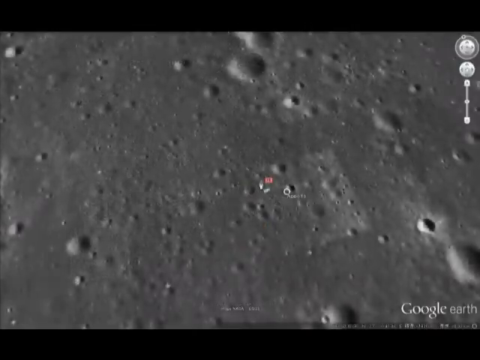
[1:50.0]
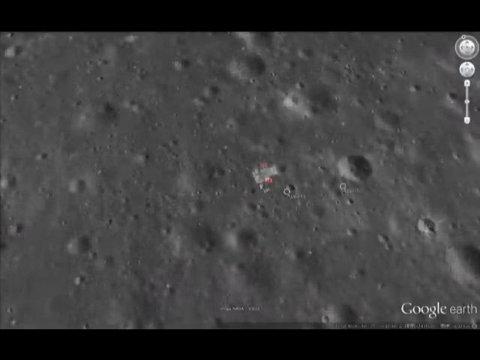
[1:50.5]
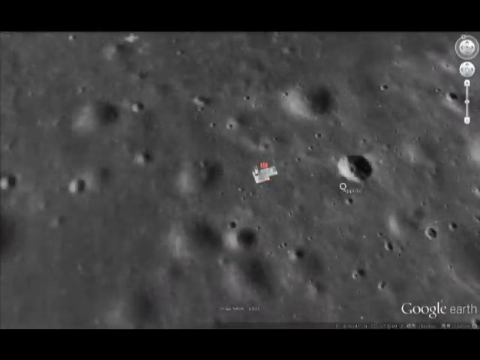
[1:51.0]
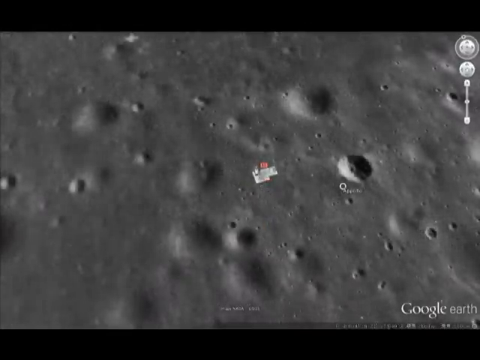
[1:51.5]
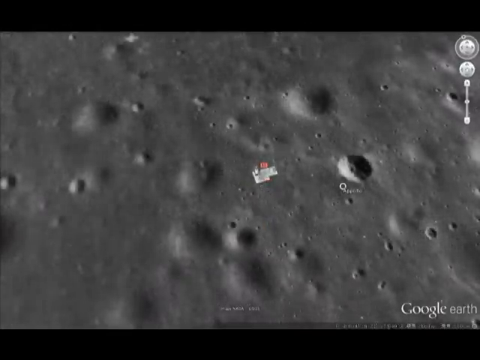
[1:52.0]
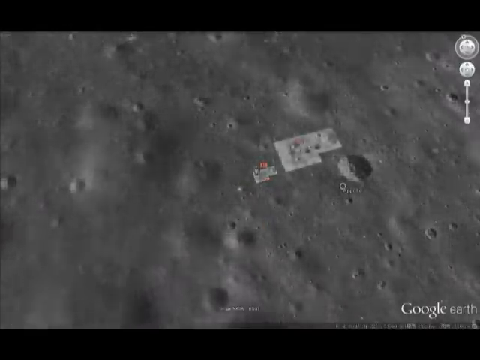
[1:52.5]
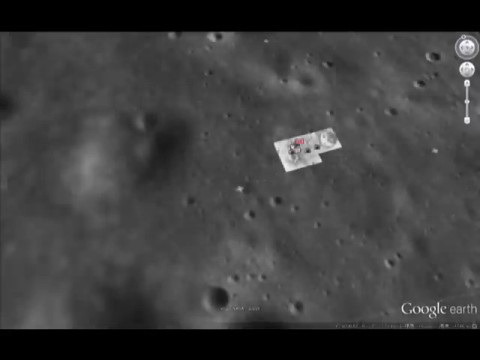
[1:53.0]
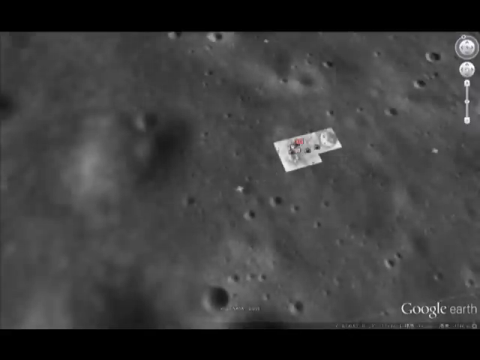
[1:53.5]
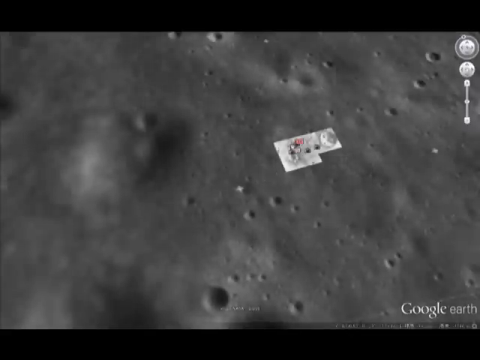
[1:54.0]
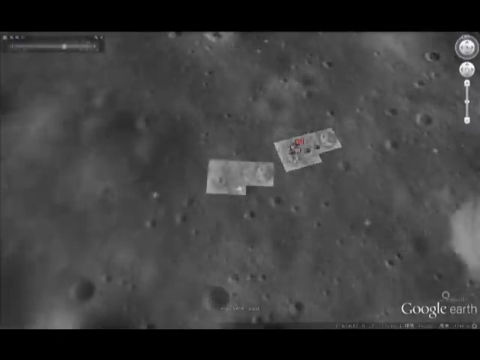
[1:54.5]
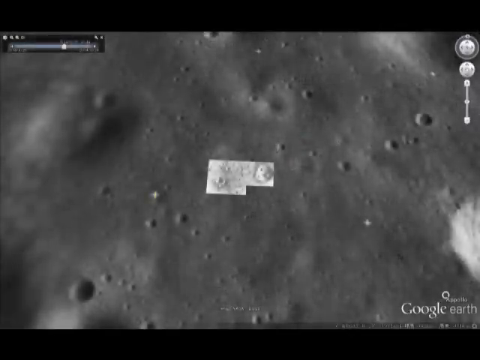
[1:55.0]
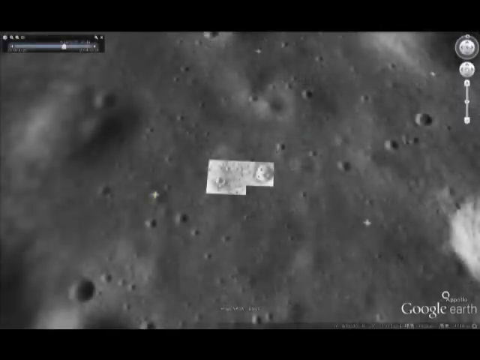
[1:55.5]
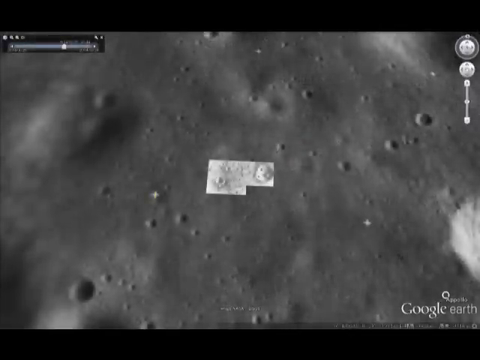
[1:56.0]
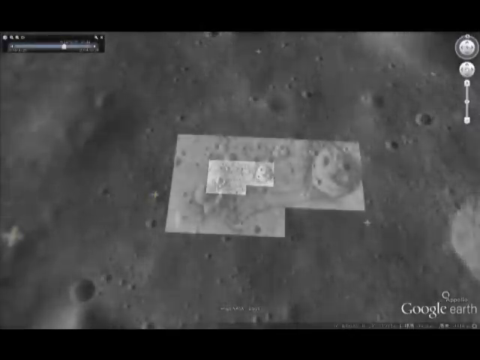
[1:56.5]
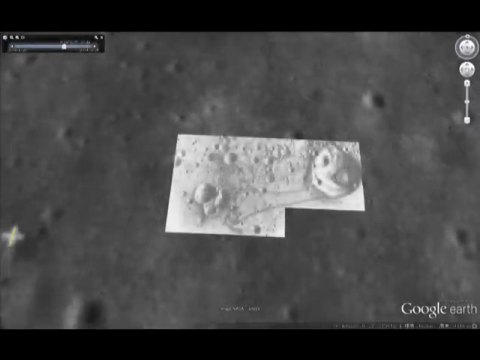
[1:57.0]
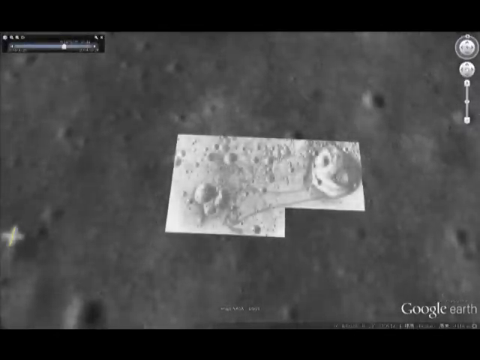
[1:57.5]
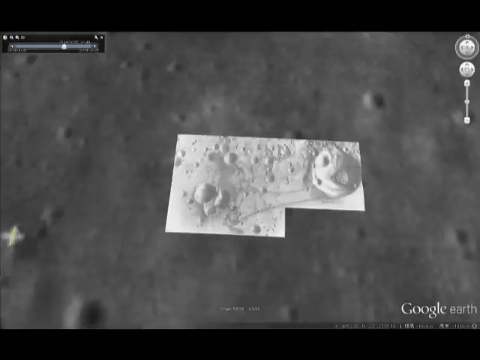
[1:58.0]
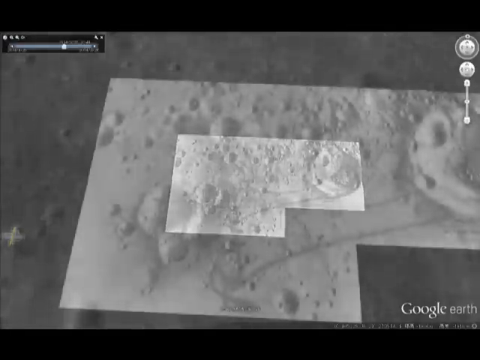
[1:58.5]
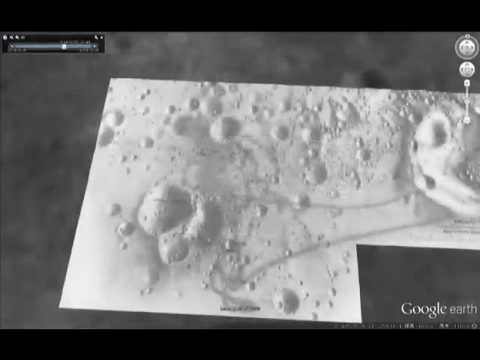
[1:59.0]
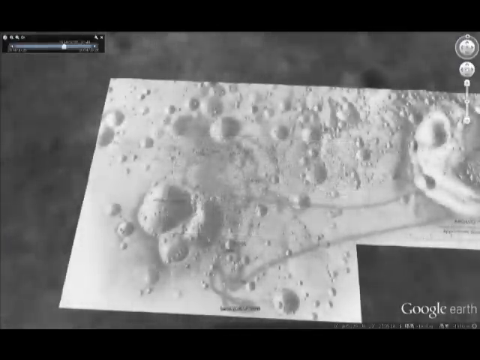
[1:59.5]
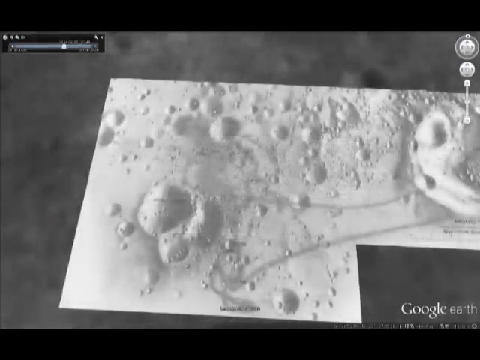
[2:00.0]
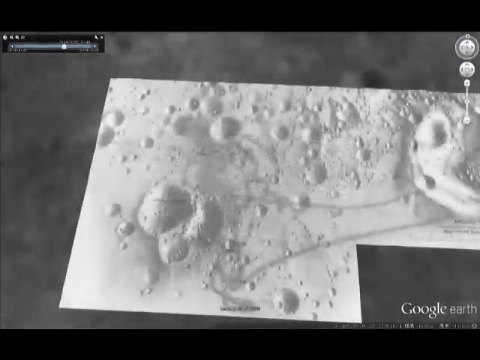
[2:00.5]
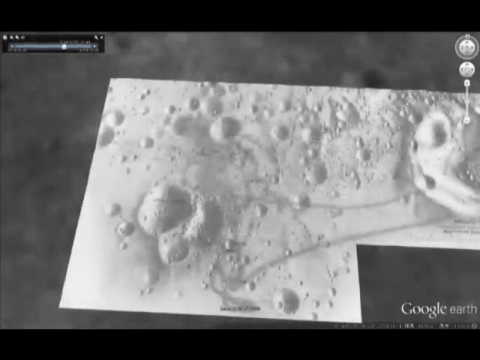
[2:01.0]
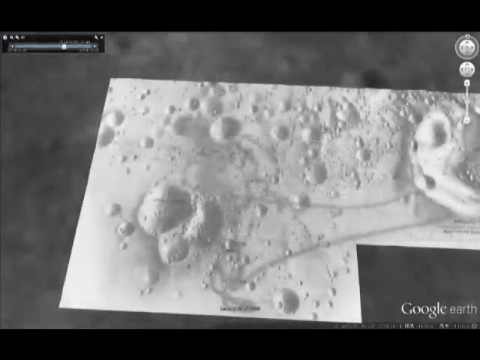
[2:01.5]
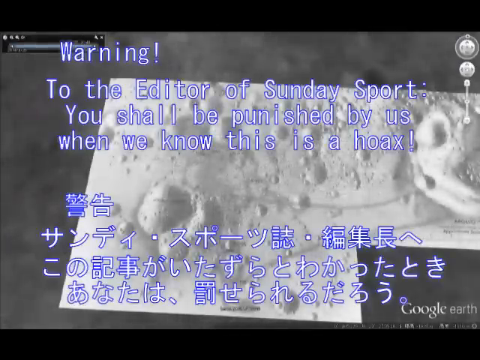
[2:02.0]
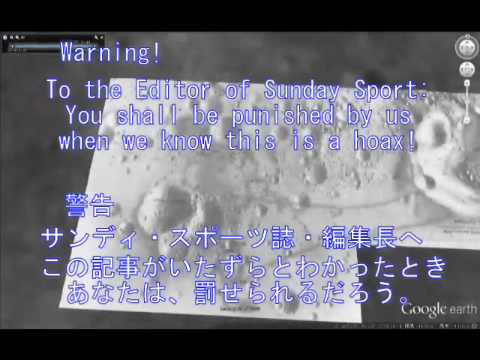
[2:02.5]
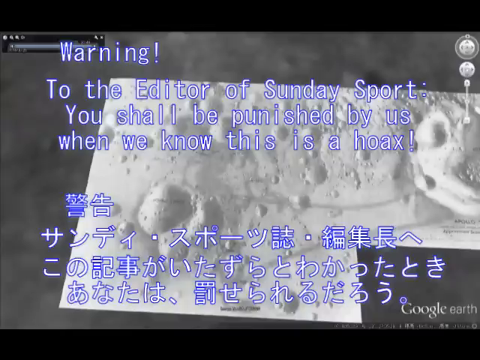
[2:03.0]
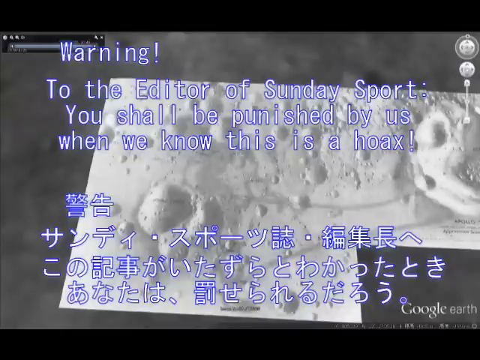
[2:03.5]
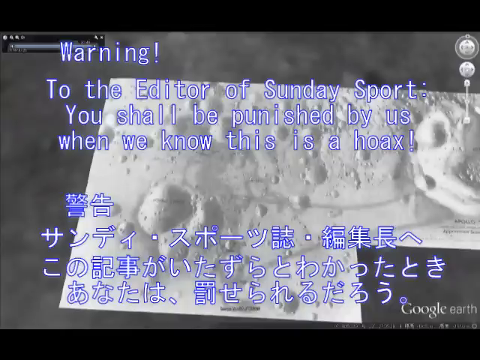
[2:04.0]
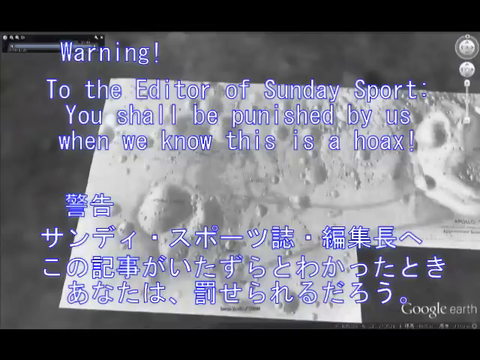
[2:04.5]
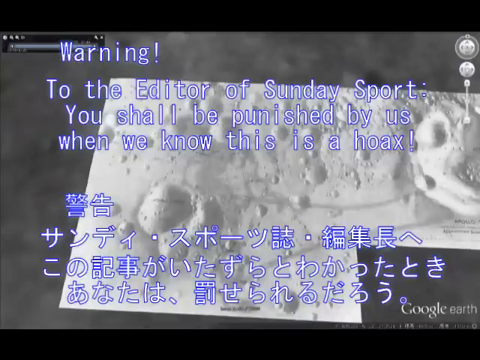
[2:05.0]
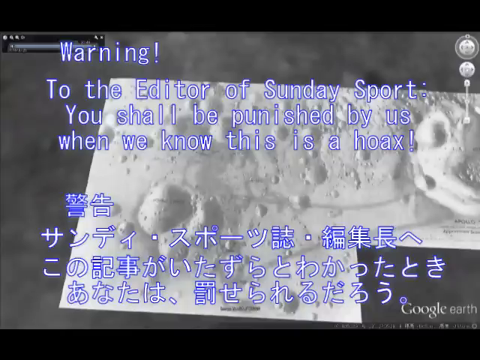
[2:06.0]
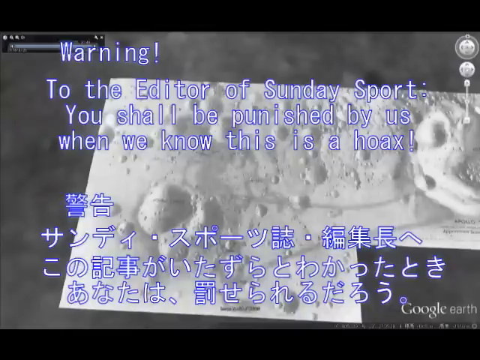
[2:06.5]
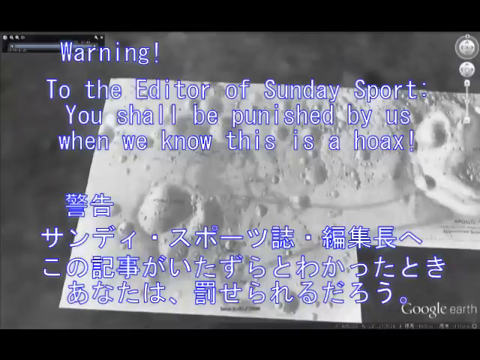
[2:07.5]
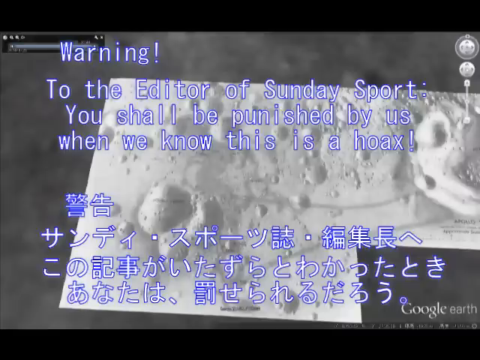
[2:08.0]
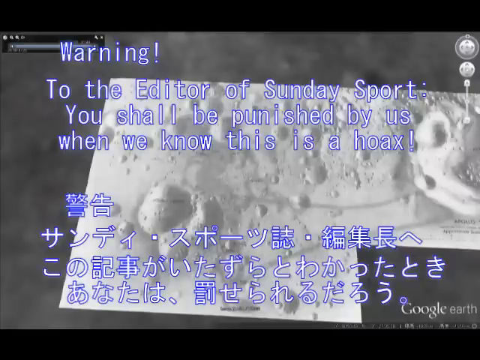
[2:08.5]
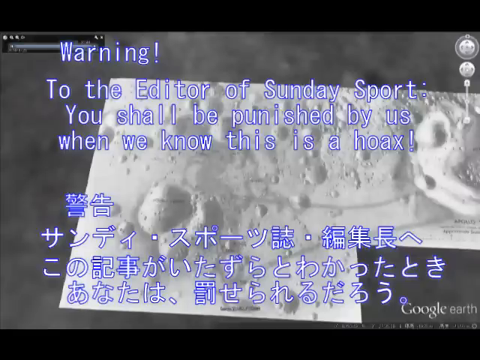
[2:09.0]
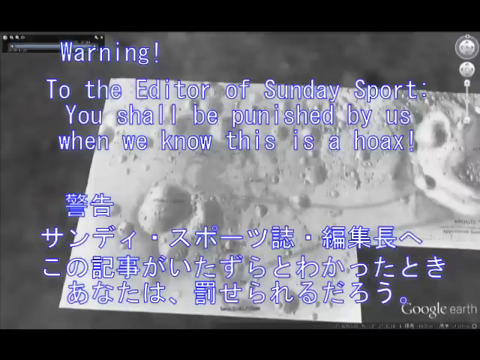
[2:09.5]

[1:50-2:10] An up-close image from Google Earth shows one surface area of the moon. There appears to be a small square area that might be some kind of landing space, maybe a space station, and a white area of the moon shows dunes. A caption reads "warning to the editor of Sunday Sport You shall be punished by us when we know that this is a hoax." The image of the moon looks like it might be fake.